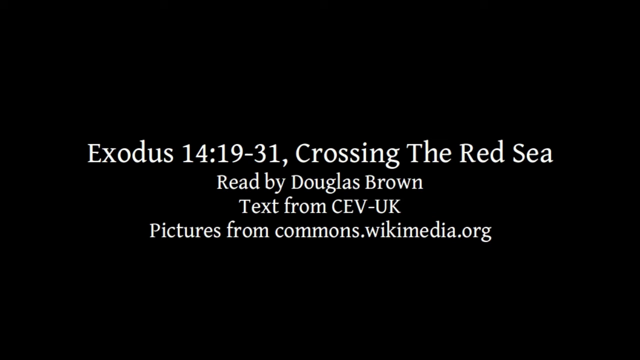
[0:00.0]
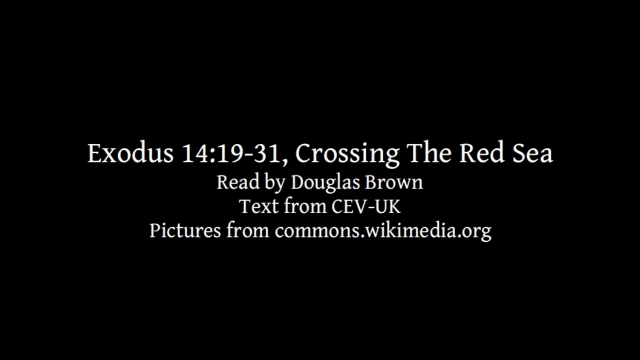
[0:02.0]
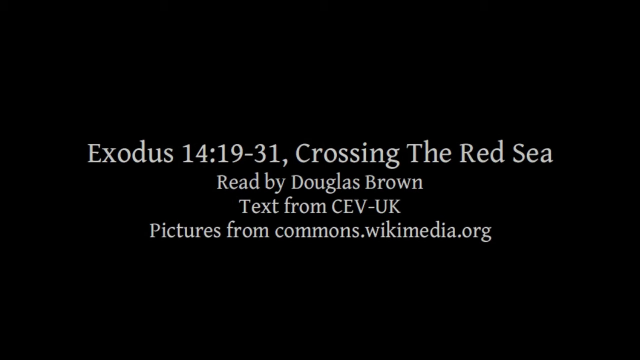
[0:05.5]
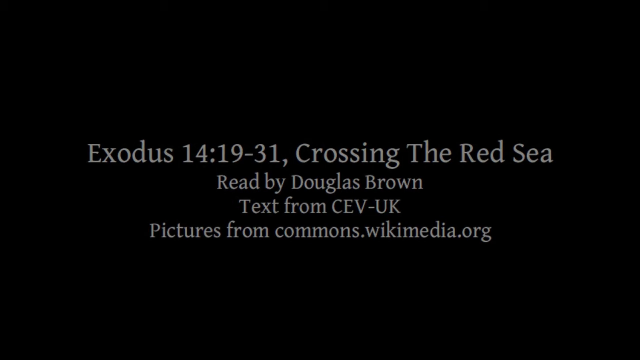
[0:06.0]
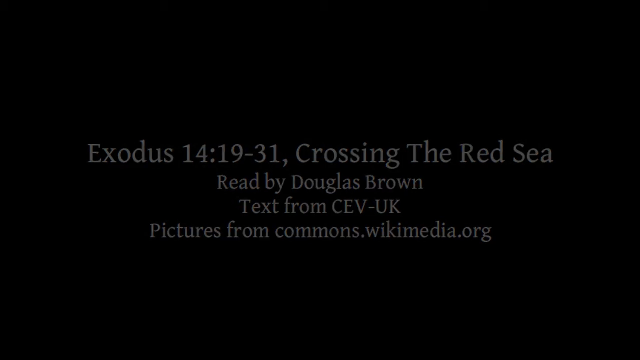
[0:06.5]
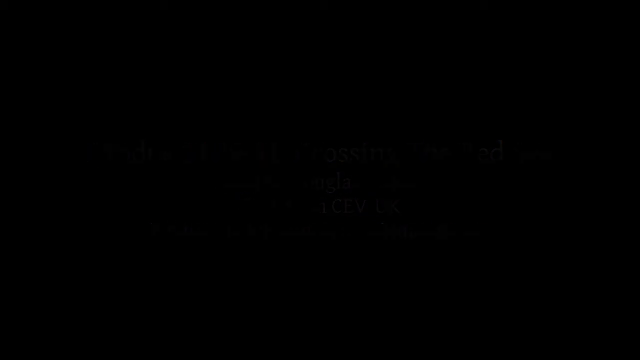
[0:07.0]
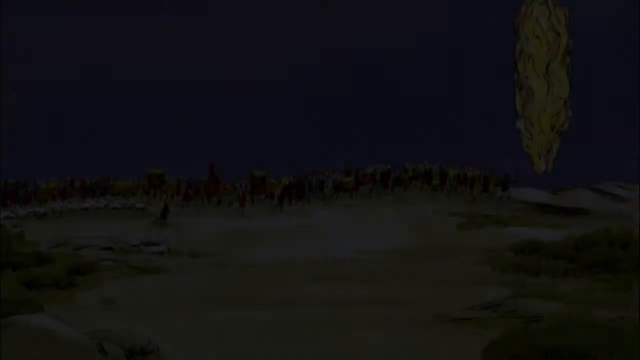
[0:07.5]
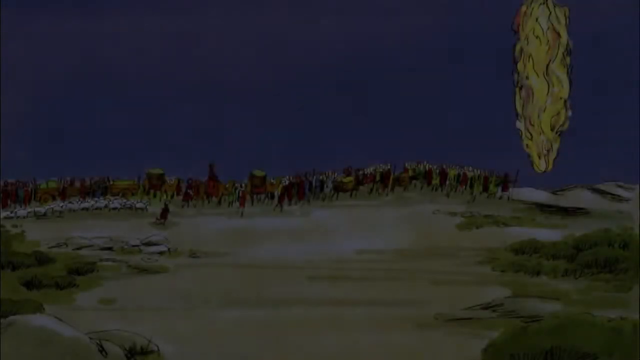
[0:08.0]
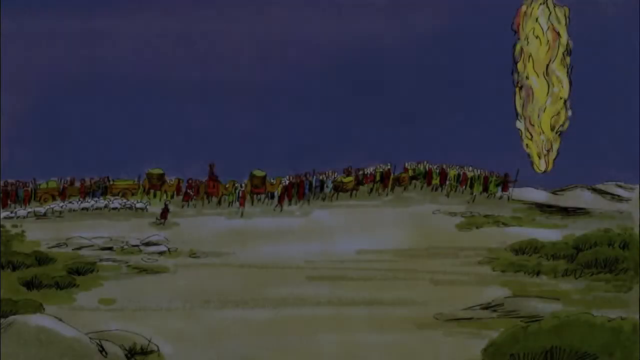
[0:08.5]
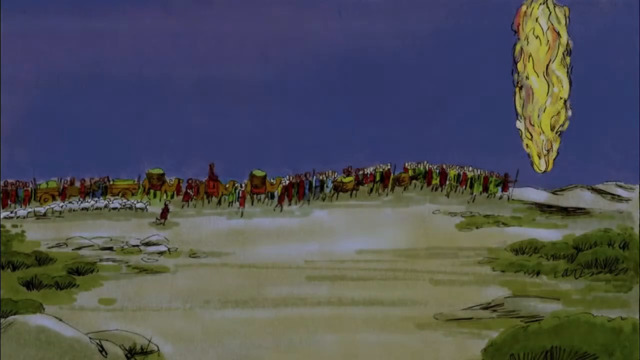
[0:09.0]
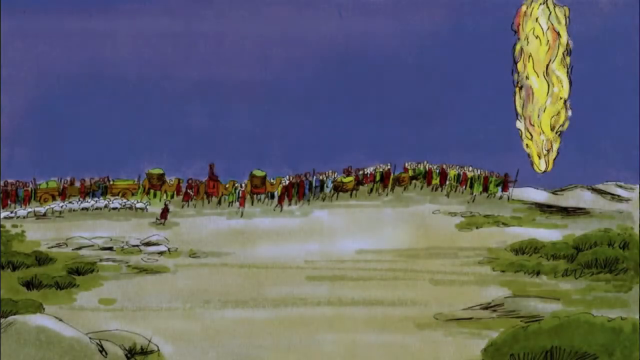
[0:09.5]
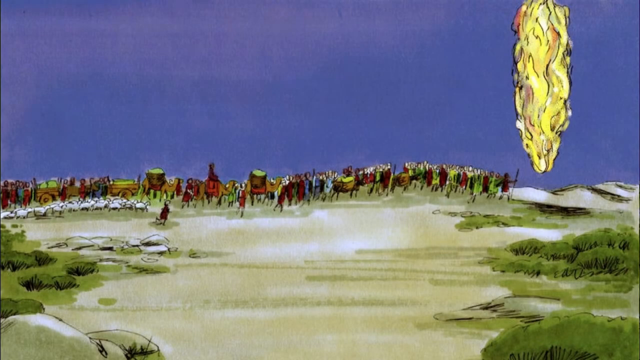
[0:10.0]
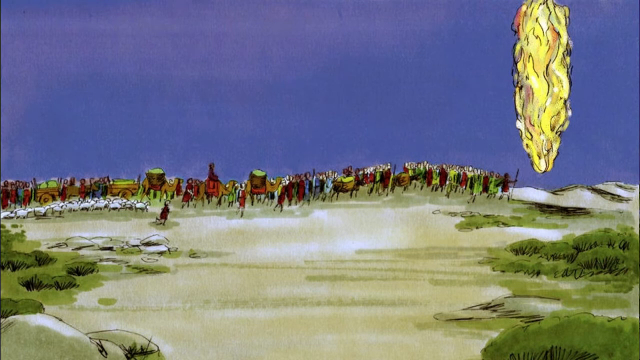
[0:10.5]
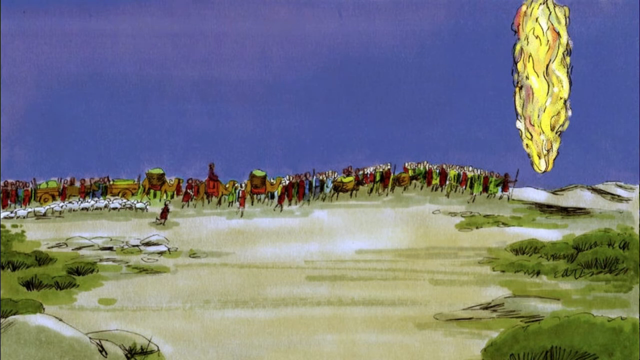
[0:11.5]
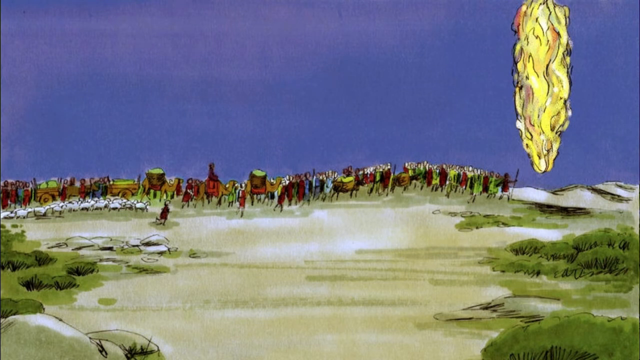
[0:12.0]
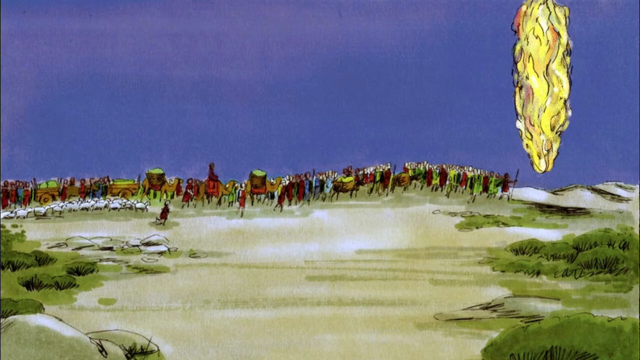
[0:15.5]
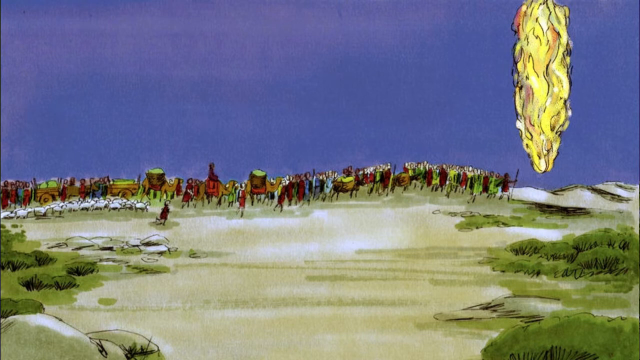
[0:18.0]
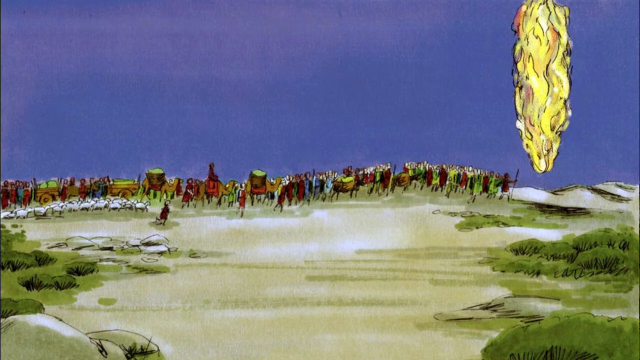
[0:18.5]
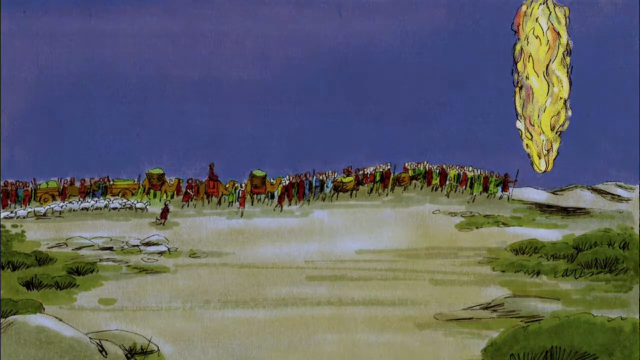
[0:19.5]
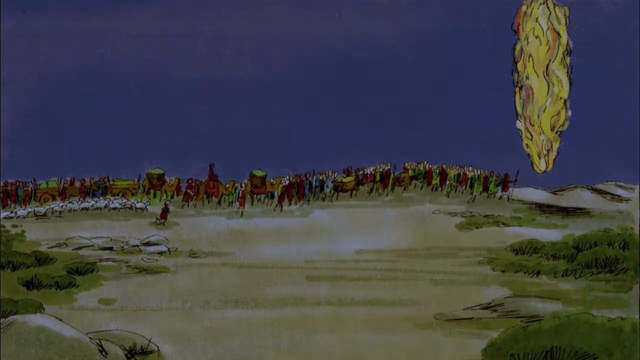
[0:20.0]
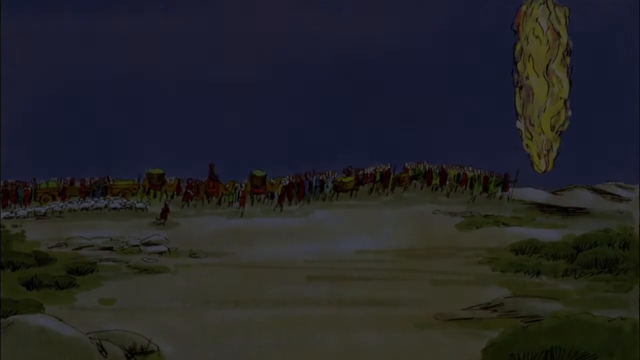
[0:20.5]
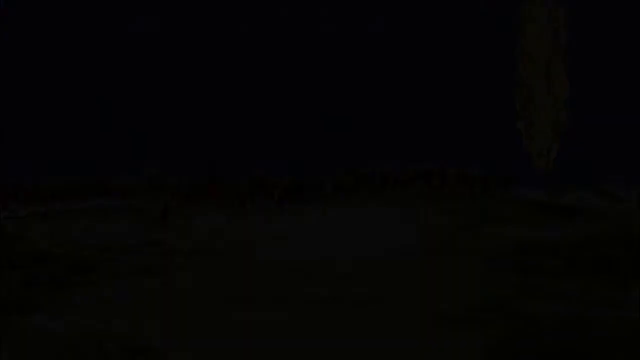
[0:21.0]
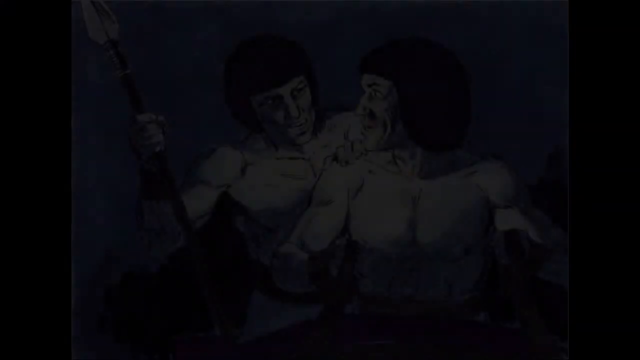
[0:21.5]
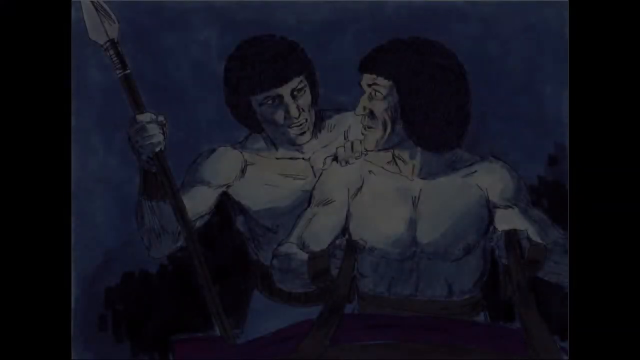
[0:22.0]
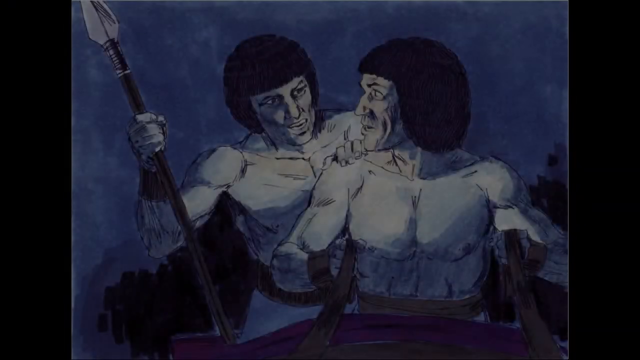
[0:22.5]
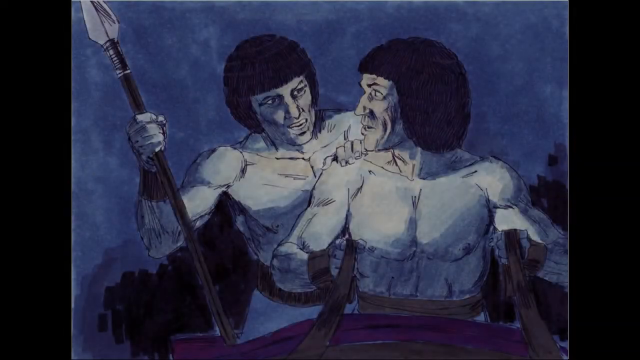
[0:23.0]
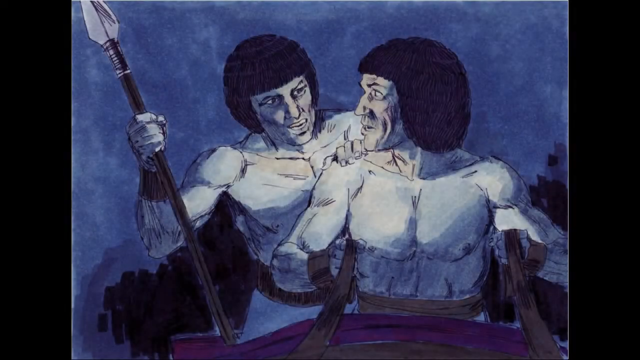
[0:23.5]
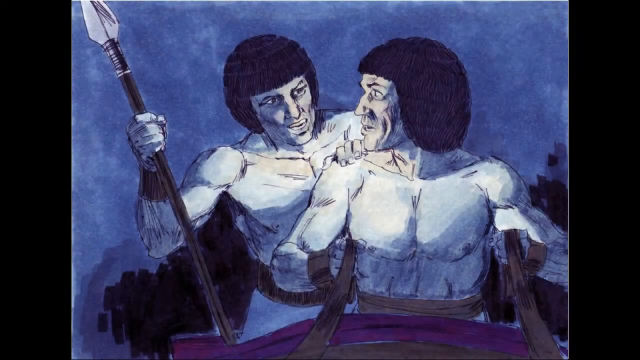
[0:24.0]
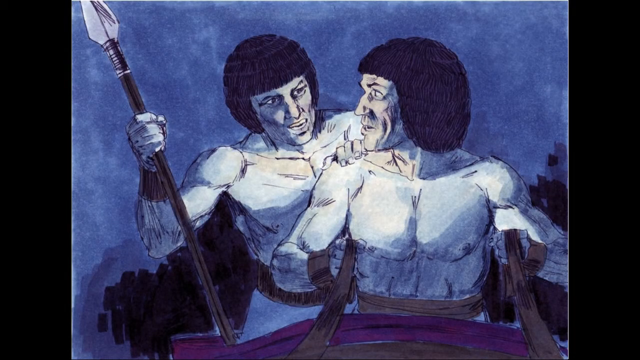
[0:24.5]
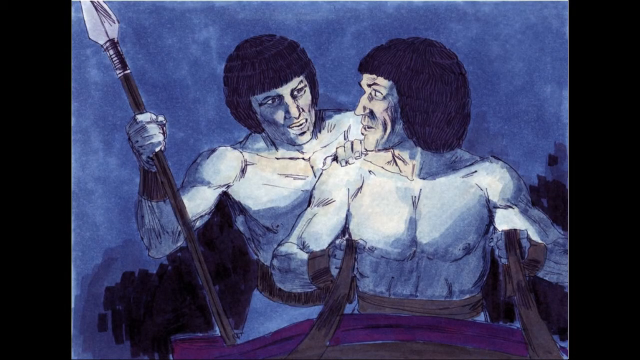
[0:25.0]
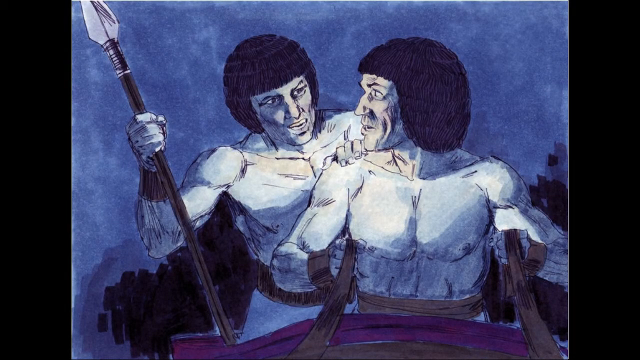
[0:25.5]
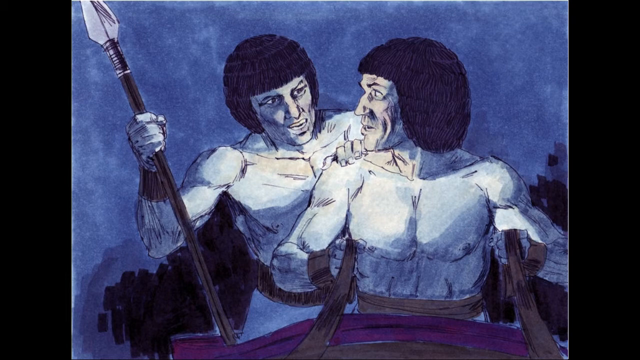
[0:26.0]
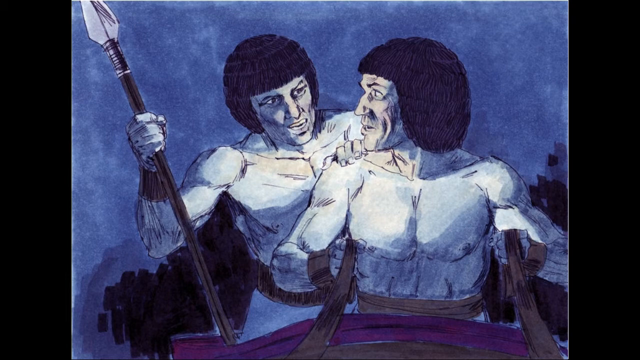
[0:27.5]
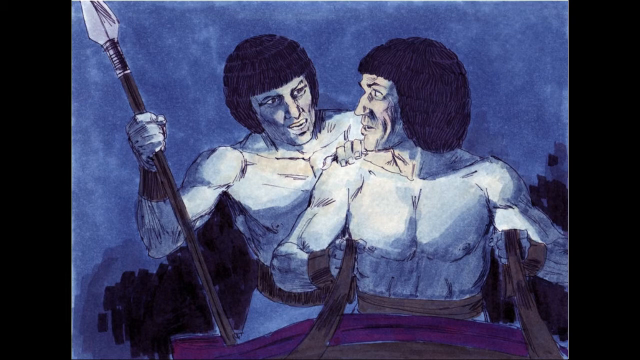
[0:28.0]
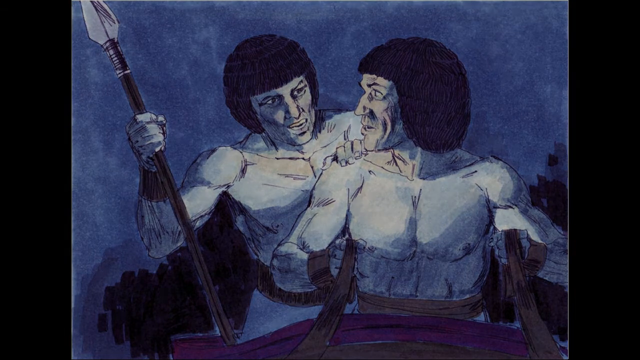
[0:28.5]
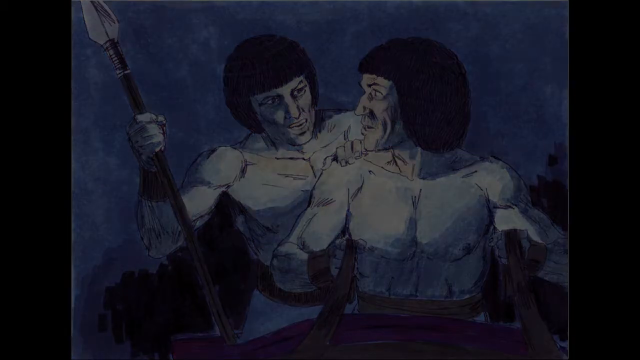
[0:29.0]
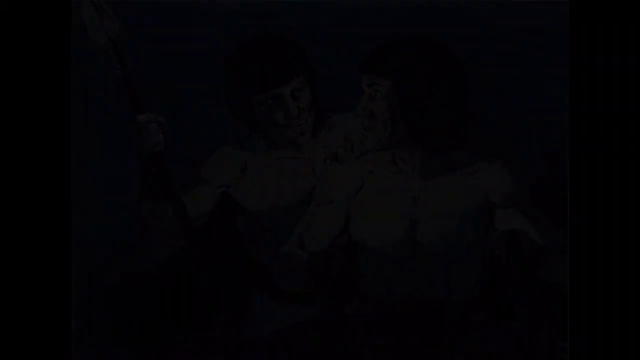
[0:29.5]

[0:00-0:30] On-screen text reads "19-31 crossing the Red Sea, read by Douglas Brown, text from SafeUK, pictures from commons.wikimedia.org". Many people walk with many animals, including some camels. They seem to be warriors, and a soldier appears to hold a knife. The scene seems to depict a war zone.